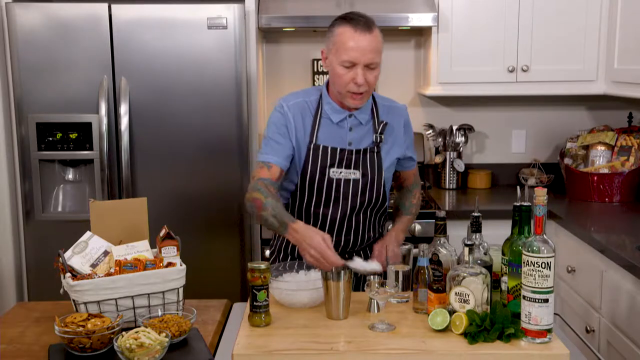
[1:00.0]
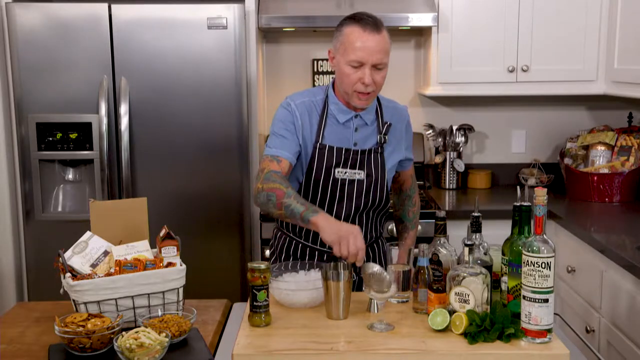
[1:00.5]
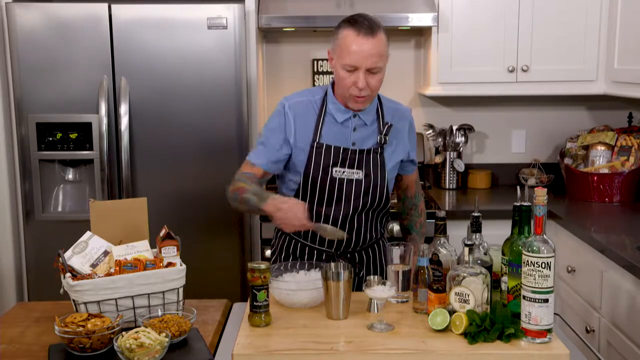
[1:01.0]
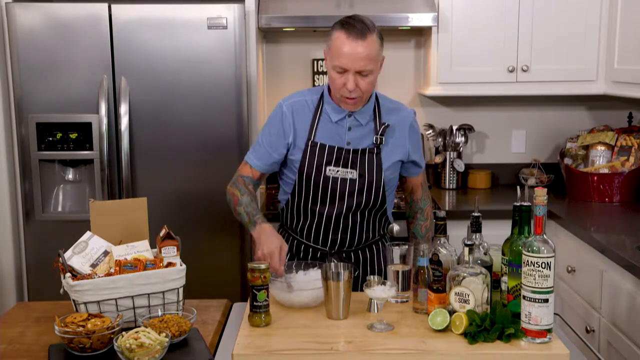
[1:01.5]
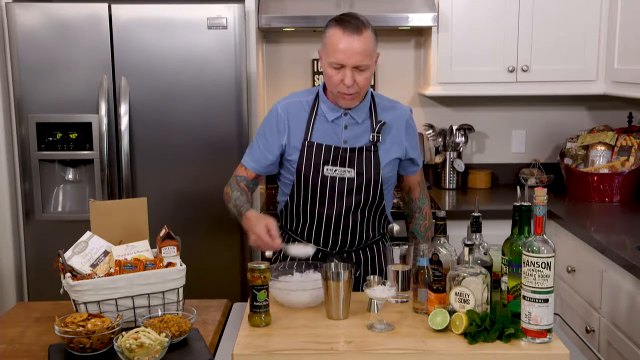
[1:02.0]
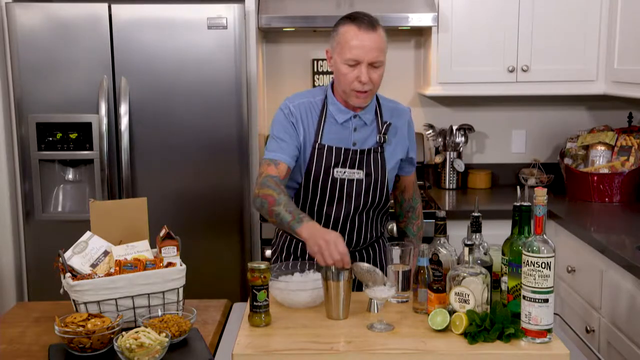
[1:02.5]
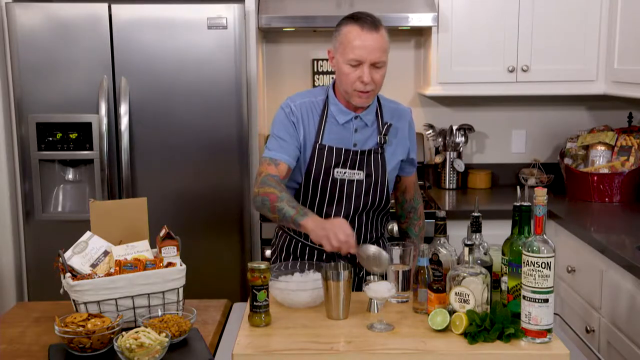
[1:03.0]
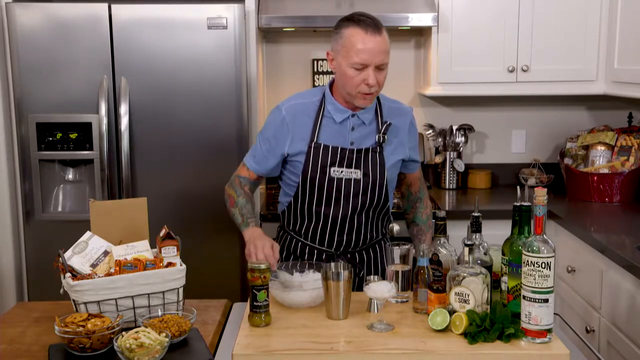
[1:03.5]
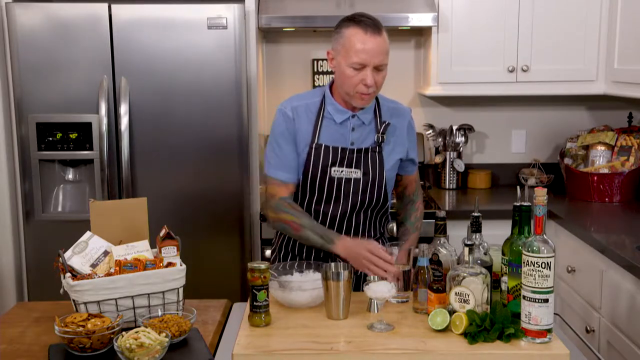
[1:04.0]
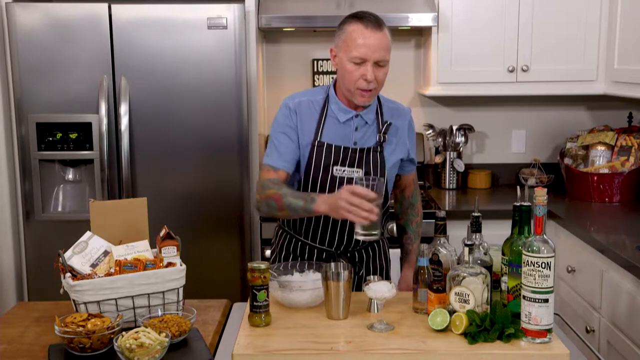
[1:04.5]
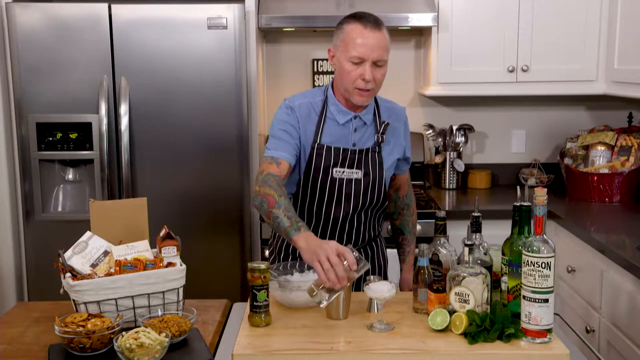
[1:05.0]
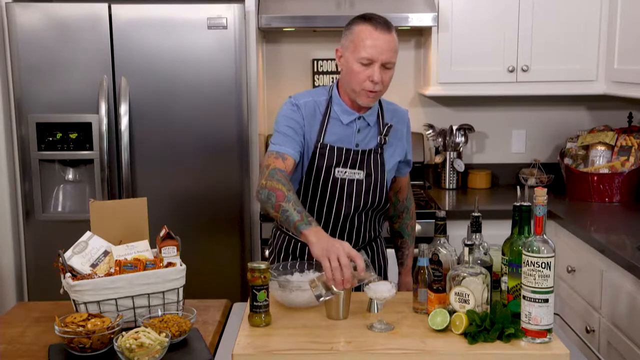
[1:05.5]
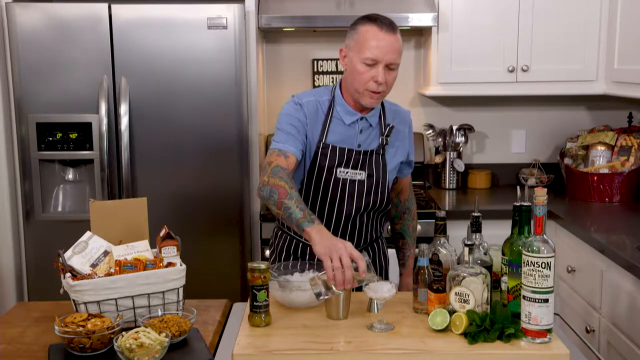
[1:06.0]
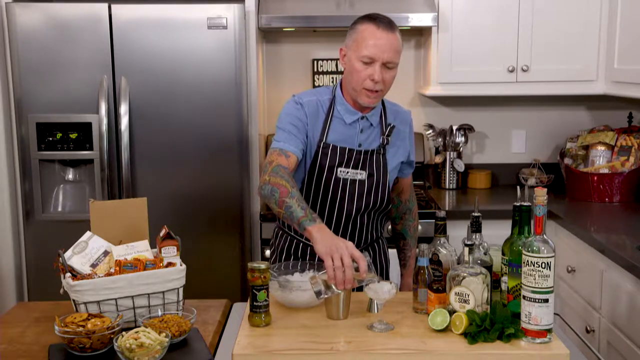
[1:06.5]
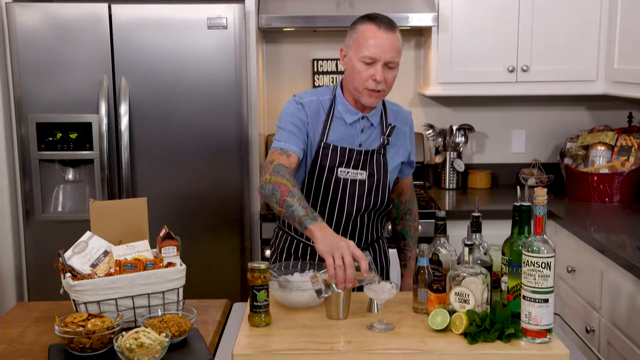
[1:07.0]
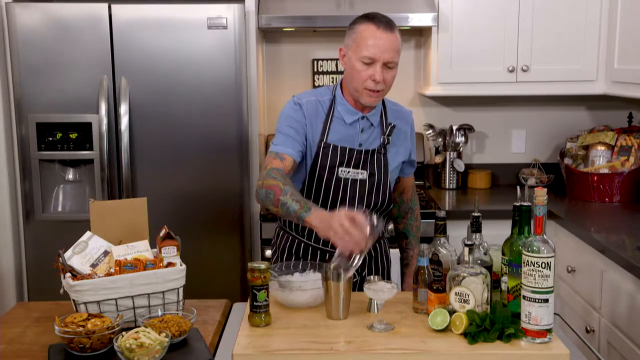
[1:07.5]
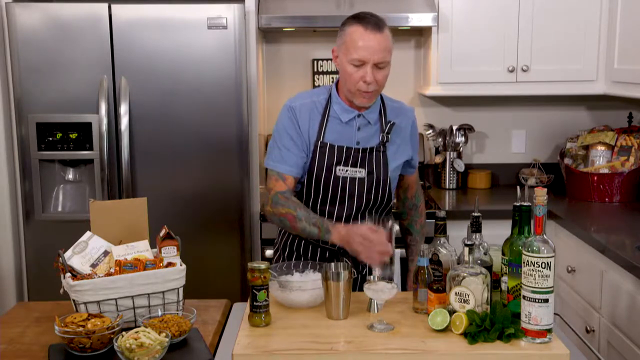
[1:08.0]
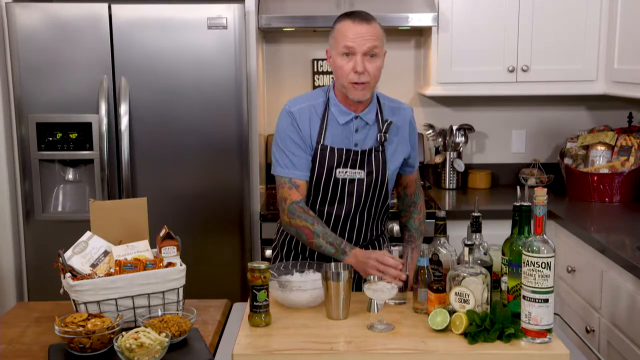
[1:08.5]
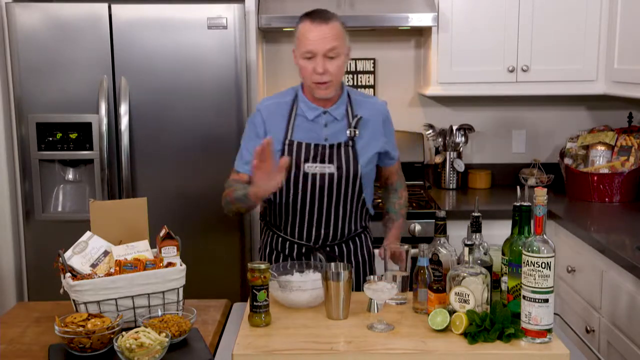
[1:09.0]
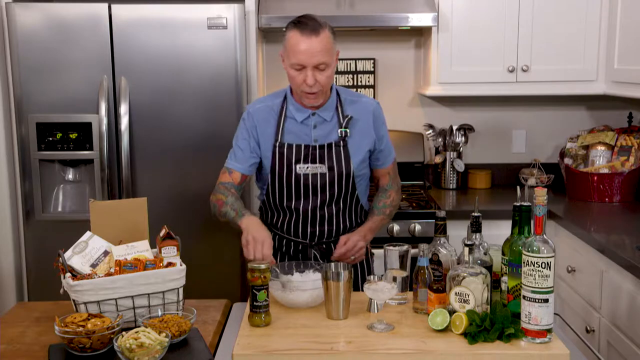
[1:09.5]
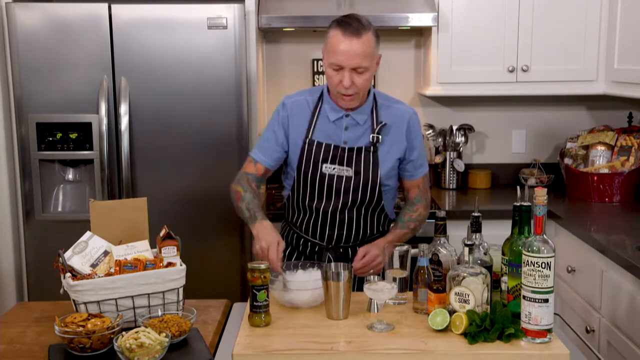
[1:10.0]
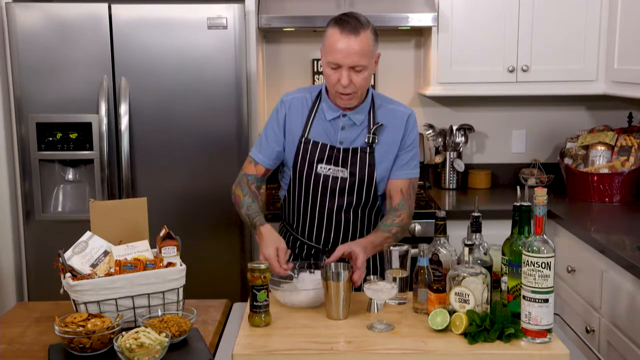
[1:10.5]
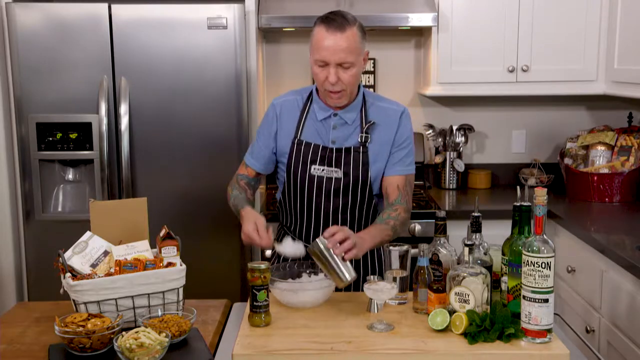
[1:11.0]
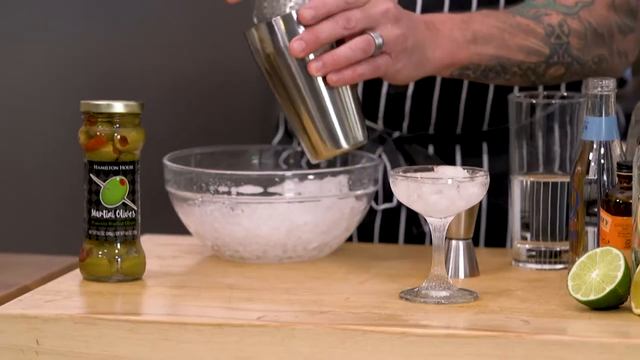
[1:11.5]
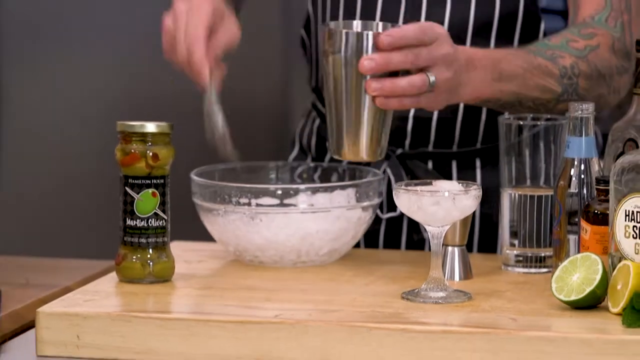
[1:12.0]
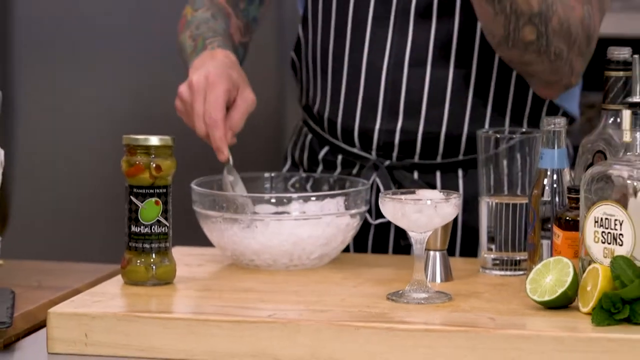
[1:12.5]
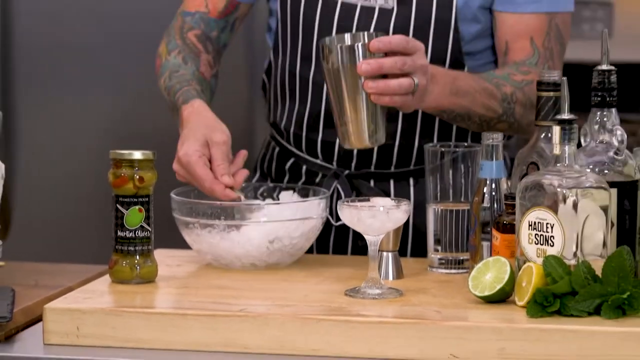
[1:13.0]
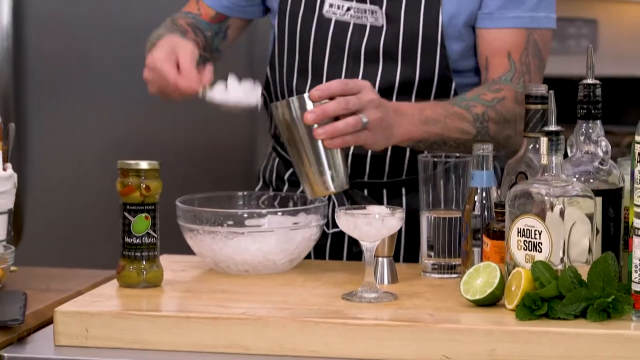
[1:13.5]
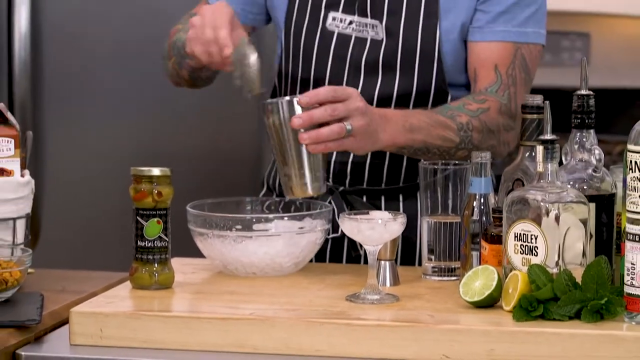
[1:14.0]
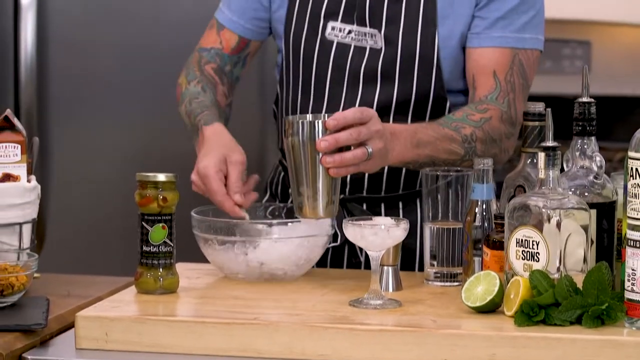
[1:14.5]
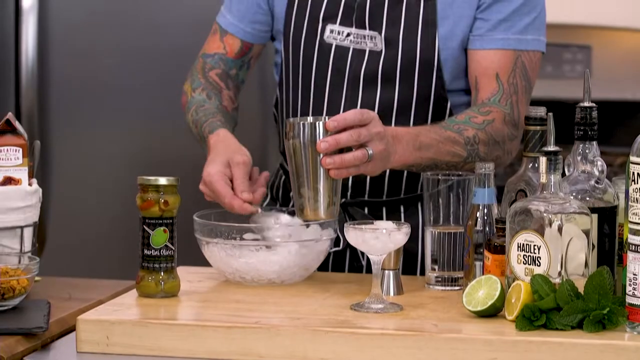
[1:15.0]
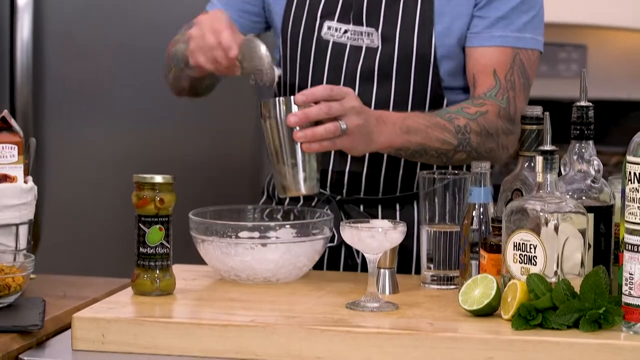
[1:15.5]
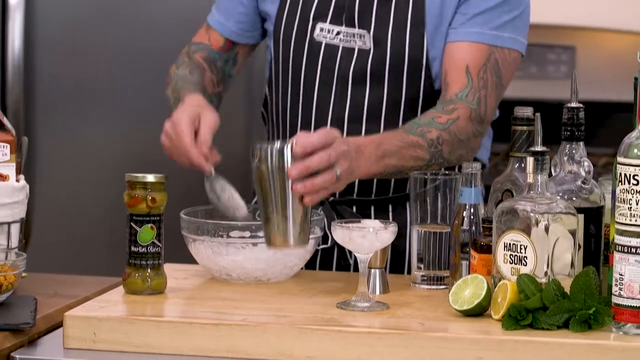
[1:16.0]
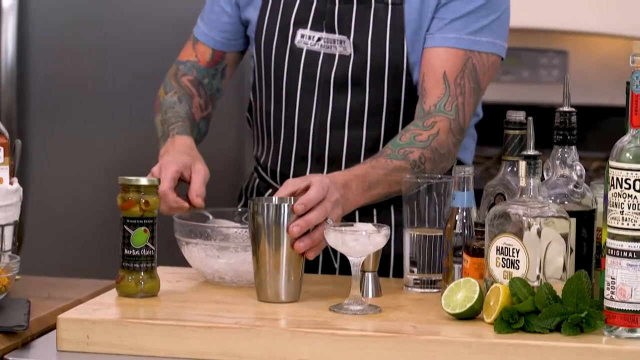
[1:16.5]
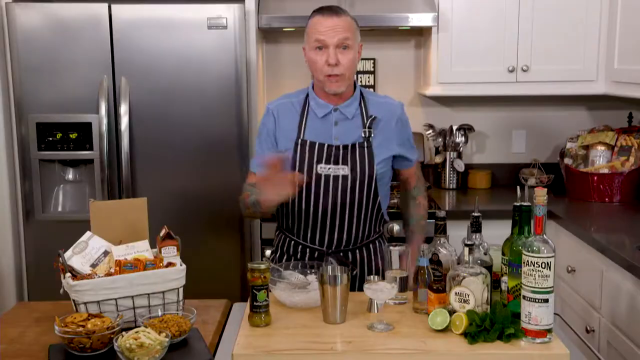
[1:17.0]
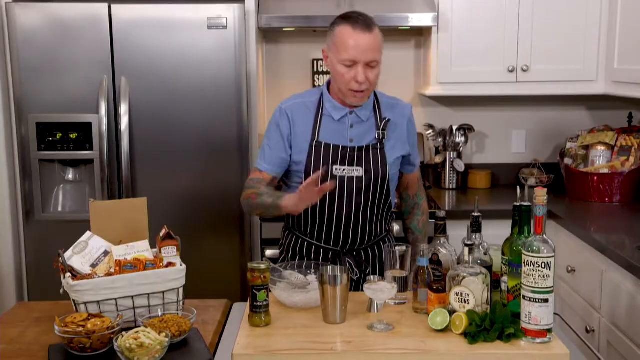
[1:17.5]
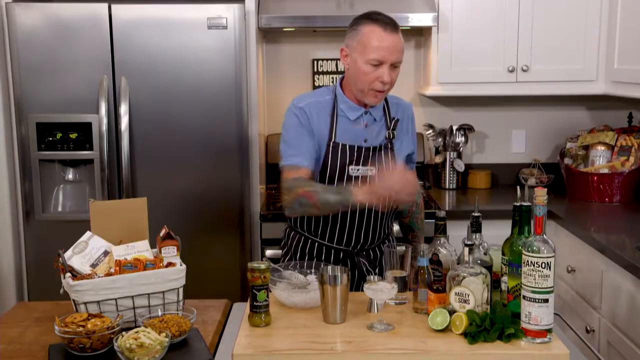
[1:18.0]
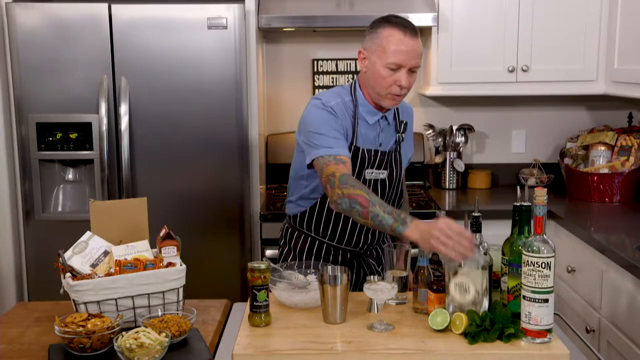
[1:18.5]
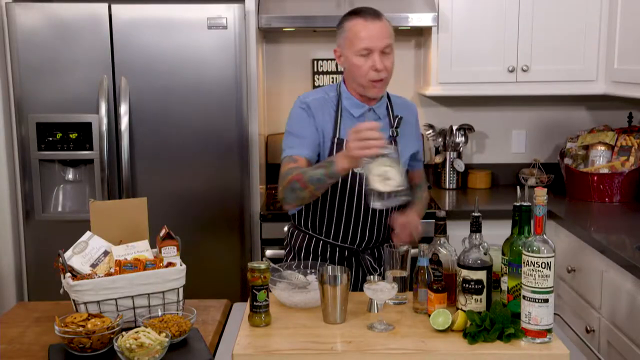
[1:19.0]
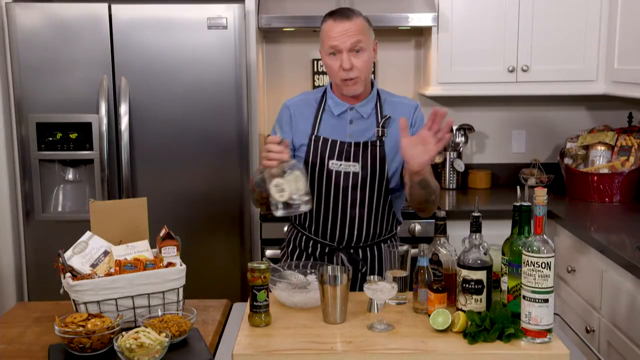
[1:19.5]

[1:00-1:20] The man pours something that may be alcohol or water; he has not opened any bottle yet. There are very green leaves. He scoops ice into what looks like a cocktail glass while talking, and points his fingers toward some of the alcohol; there is a shiny ring on his finger. After scooping the ice into the glass, he pours water, then scoops the same ice into something silver that looks like a steel jar or tumbler. He holds a glass jar that seems to contain a mixture of something like lemons. The board or counter where he is preparing the drink is different from the one the hamper is on.